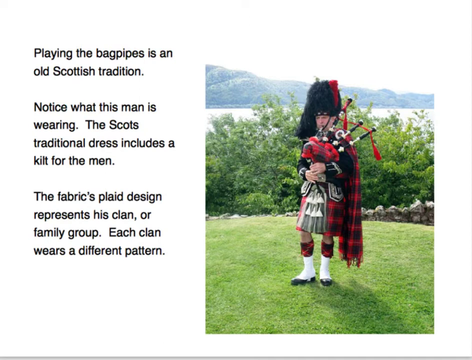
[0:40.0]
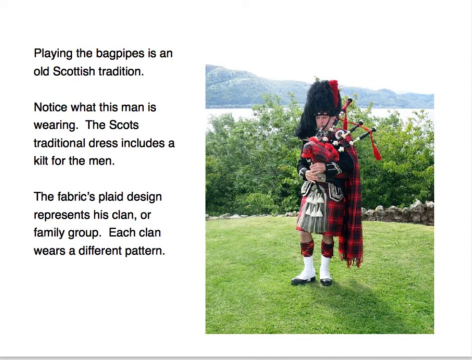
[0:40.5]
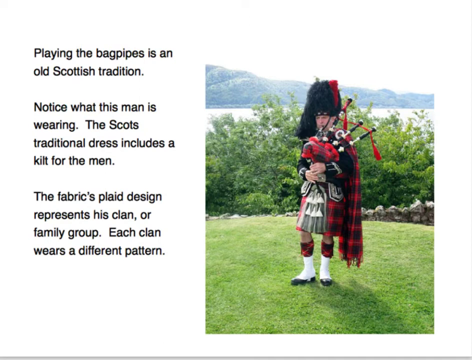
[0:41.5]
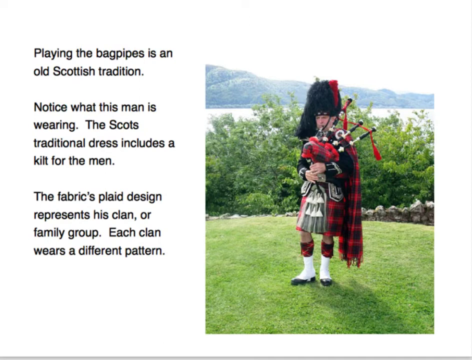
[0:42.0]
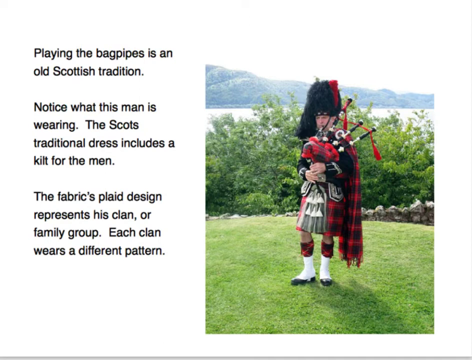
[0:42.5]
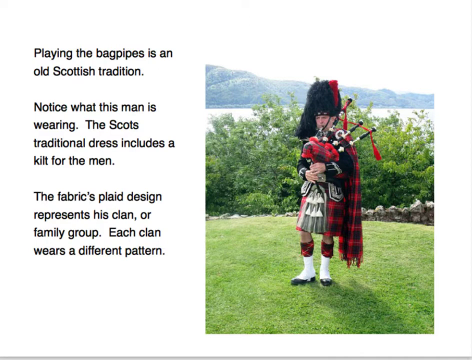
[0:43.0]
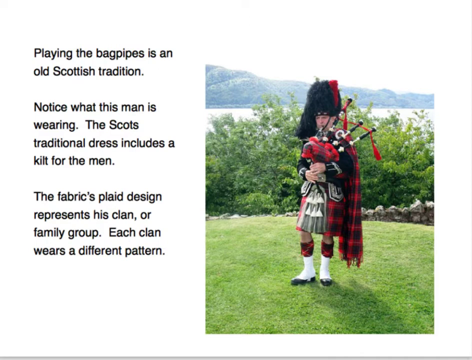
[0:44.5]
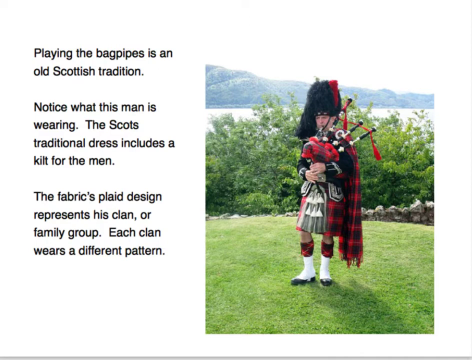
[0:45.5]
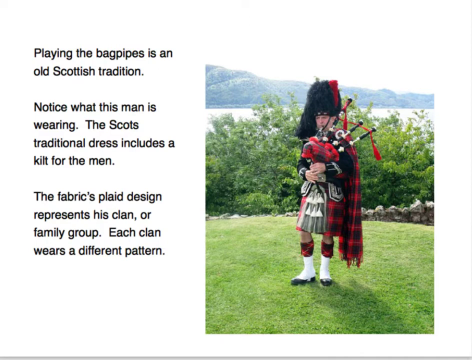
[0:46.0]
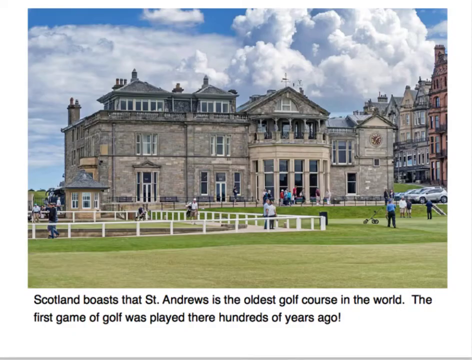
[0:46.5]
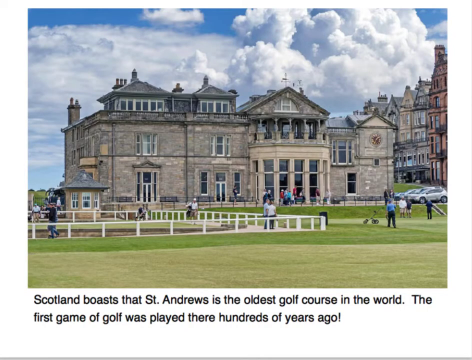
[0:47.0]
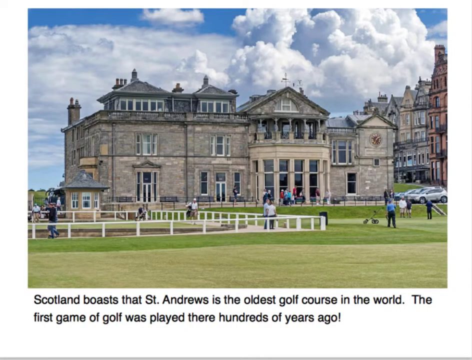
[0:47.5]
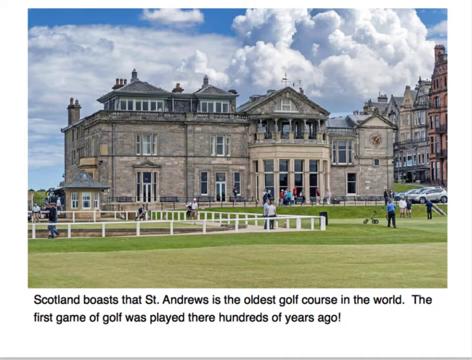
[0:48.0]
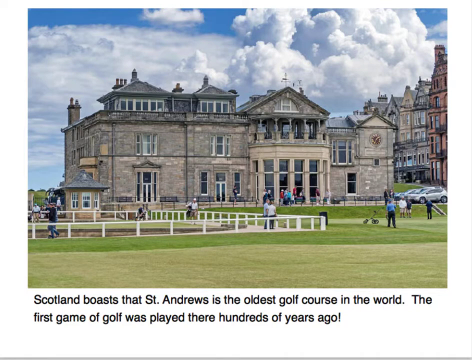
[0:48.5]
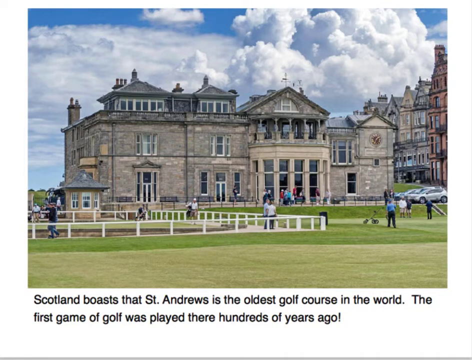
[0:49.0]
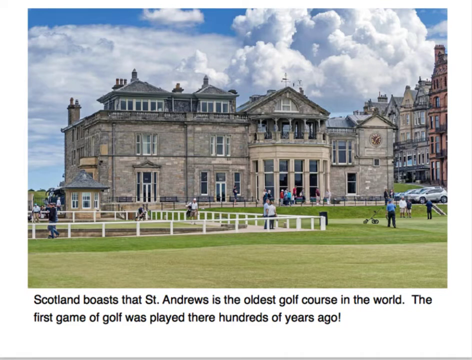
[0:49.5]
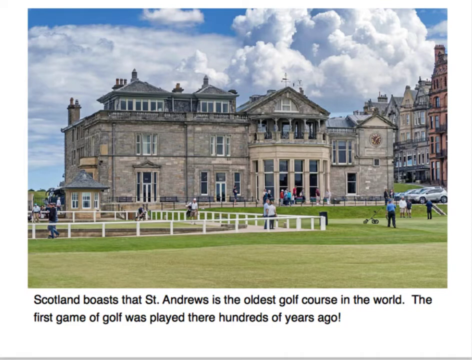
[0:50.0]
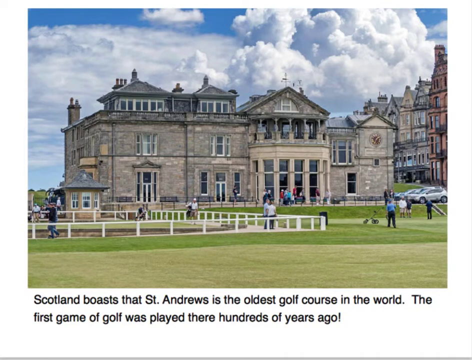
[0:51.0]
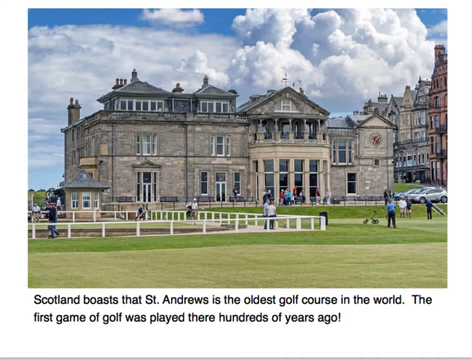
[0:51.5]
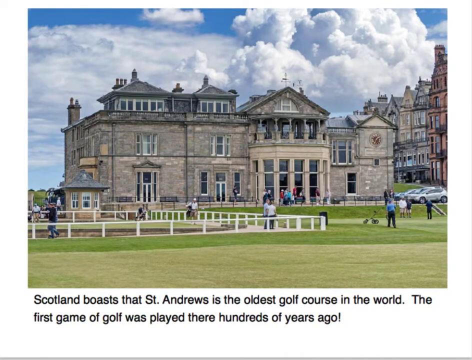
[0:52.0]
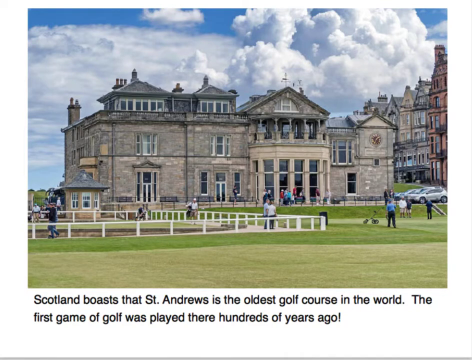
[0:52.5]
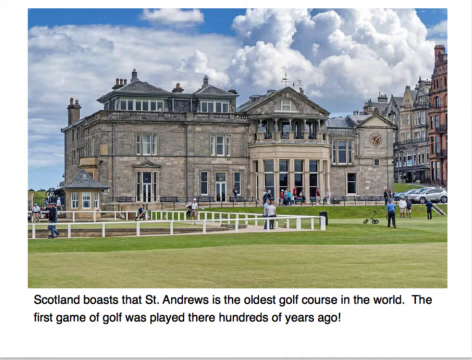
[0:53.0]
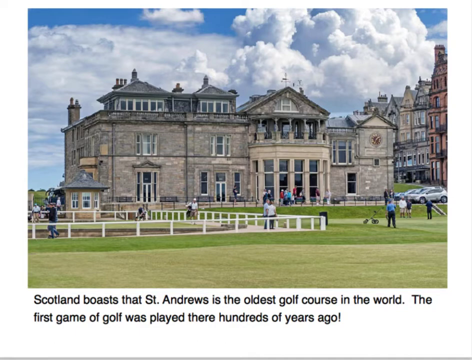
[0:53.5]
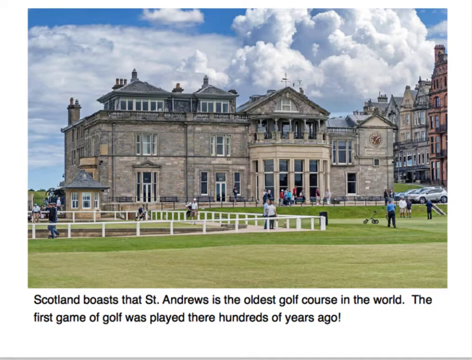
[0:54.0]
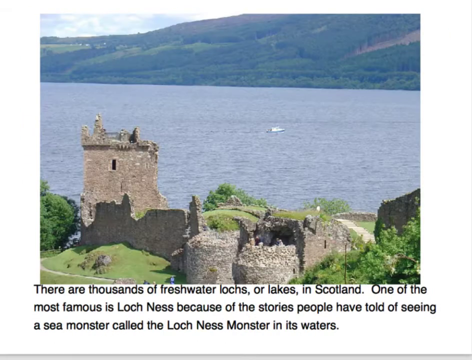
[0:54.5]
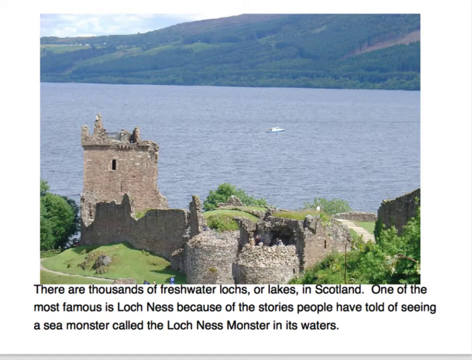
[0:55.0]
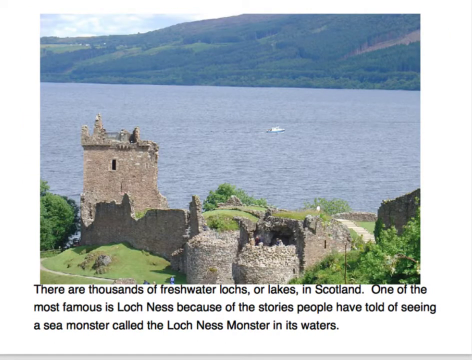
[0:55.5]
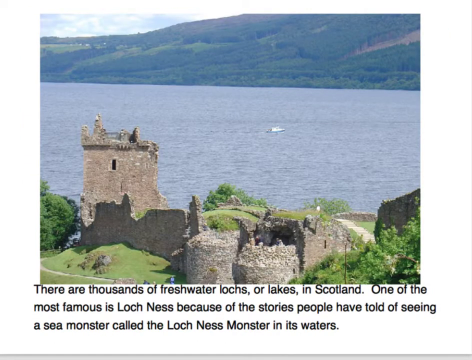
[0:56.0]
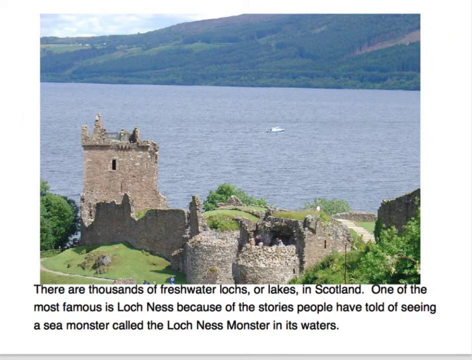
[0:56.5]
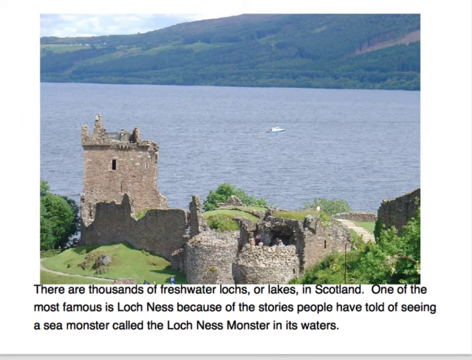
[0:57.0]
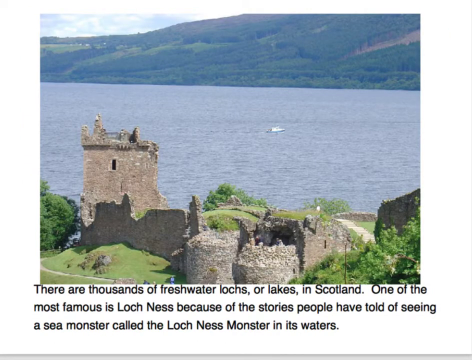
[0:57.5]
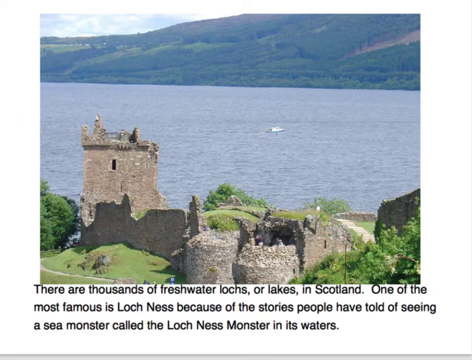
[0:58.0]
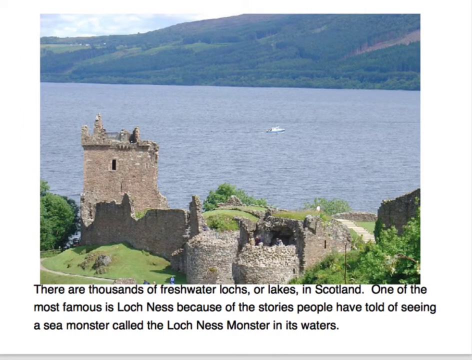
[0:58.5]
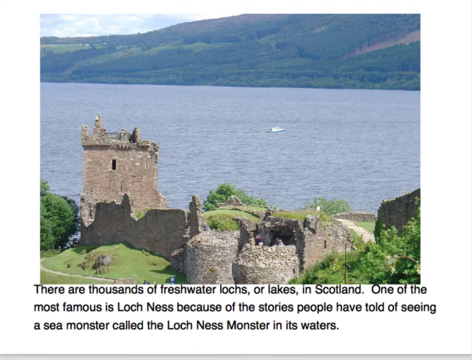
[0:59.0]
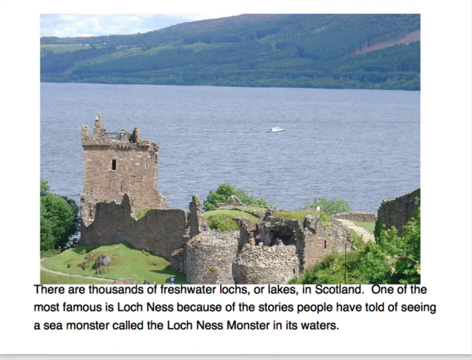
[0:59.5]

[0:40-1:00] A man wearing a red and black kilt plays bagpipes that are also red and black. He is standing on grass, and behind him are some tall bushes and trees with a mountainous scene in the distance. The text on screen reads, "Playing the bagpipes is an old Scottish tradition. Notice what this man is wearing. The Scots traditional dress includes a kilt for the men. The fabric's plaid design represents his clan or family group. Each clan wears a different pattern." Next comes St. Andrews Golf Course, with luscious green golfing turf and lots of people walking around playing golf or walking on the sidewalk in the background. In the distant background is a large, tall building. The text at the bottom reads, "Scotland boasts that St. Andrews is the oldest golf course in the world. The first game of golf was played there hundreds of years ago." The slideshow then moves to a lake scene with a boat in the far distance and tall hills and mountains in the background.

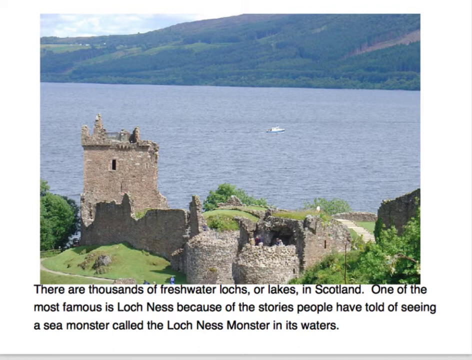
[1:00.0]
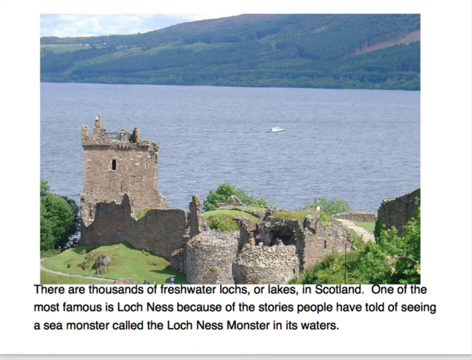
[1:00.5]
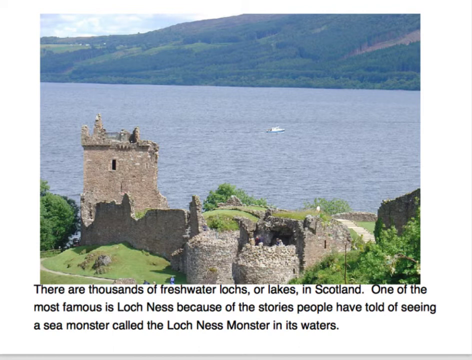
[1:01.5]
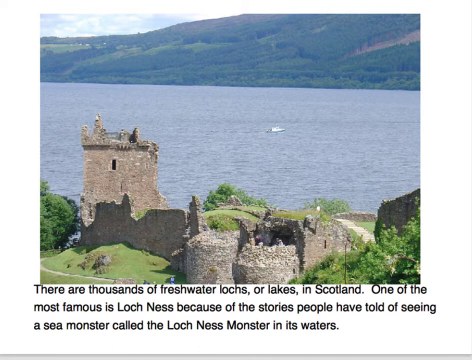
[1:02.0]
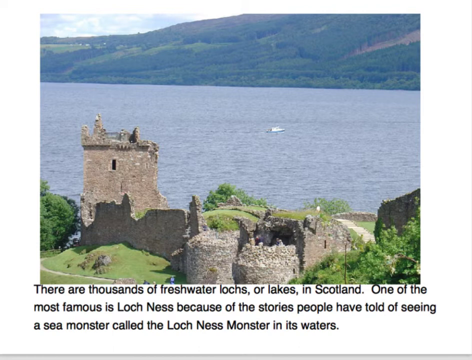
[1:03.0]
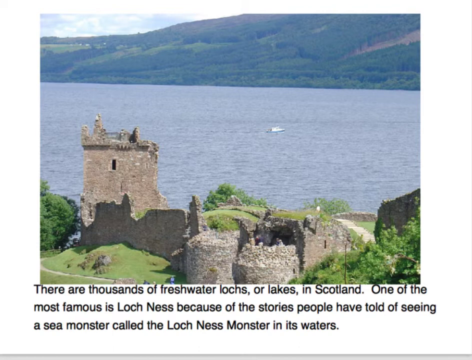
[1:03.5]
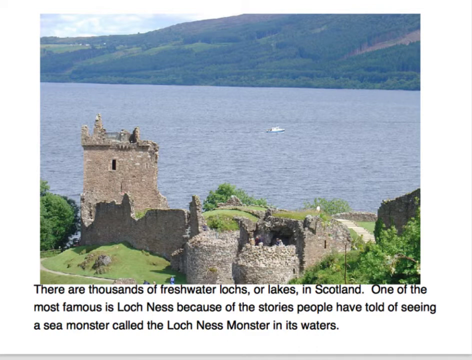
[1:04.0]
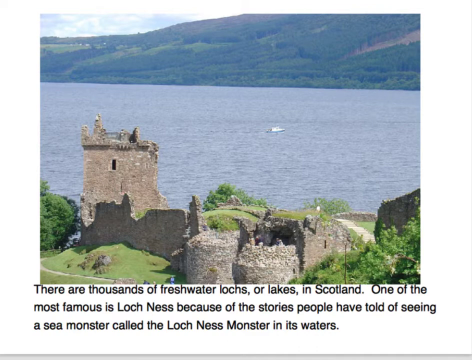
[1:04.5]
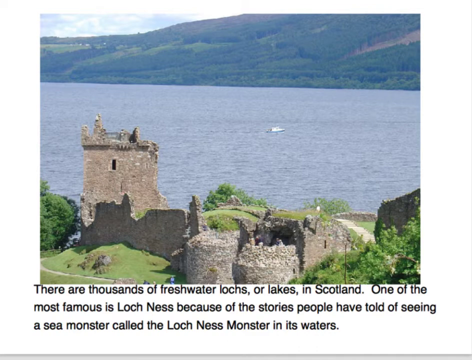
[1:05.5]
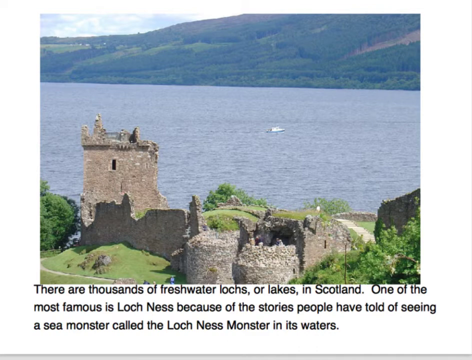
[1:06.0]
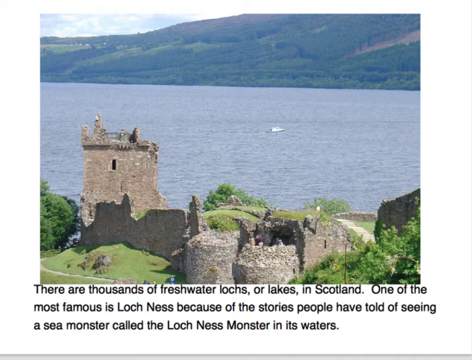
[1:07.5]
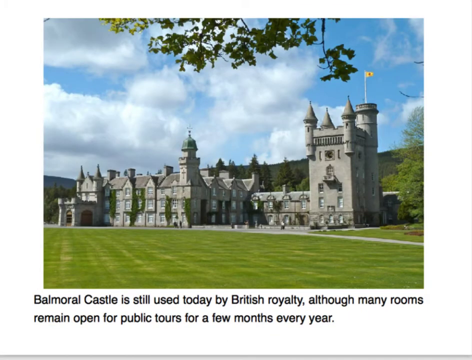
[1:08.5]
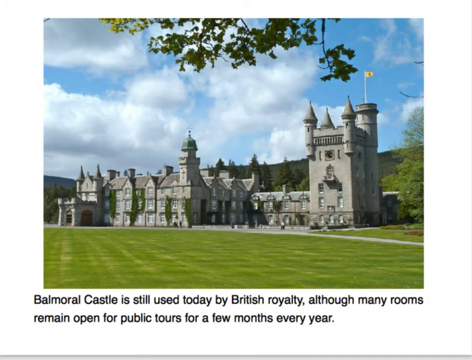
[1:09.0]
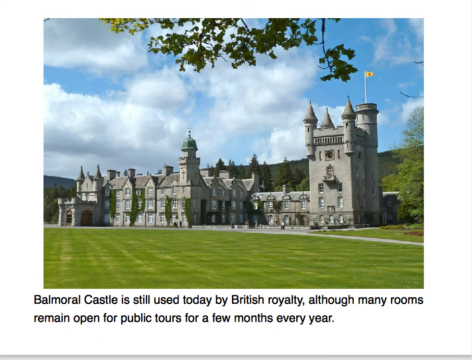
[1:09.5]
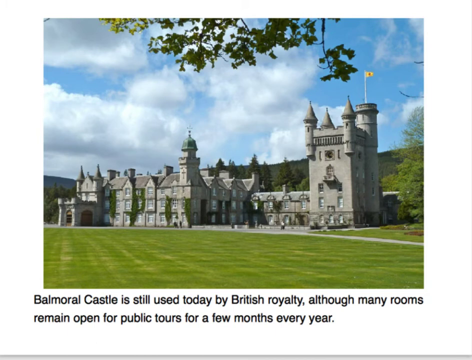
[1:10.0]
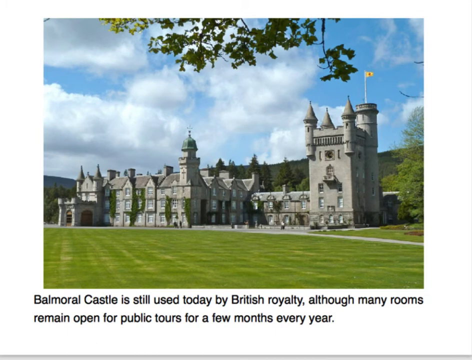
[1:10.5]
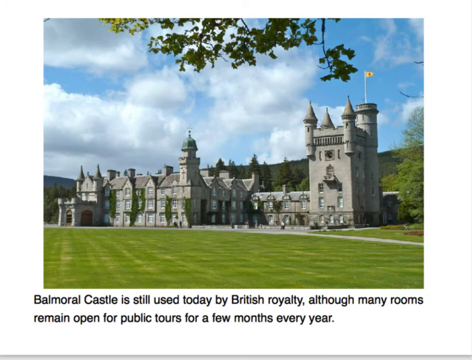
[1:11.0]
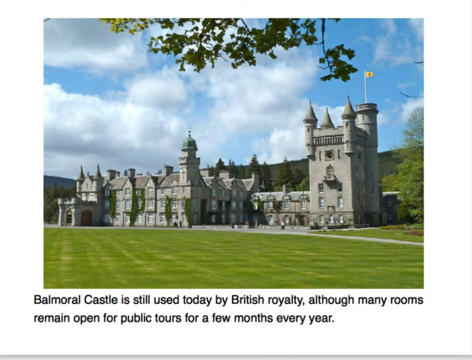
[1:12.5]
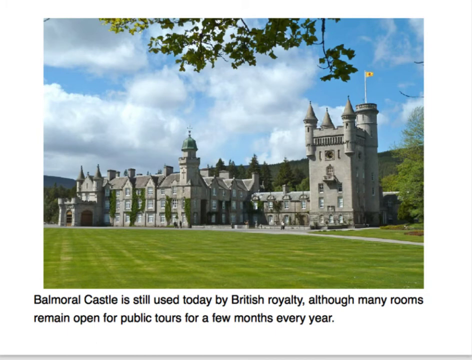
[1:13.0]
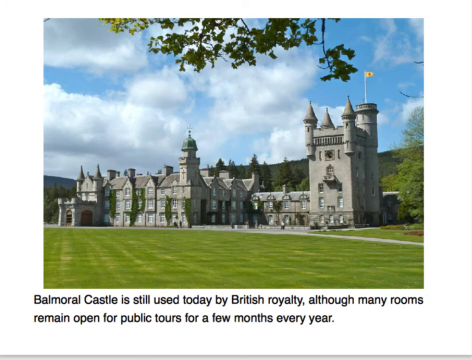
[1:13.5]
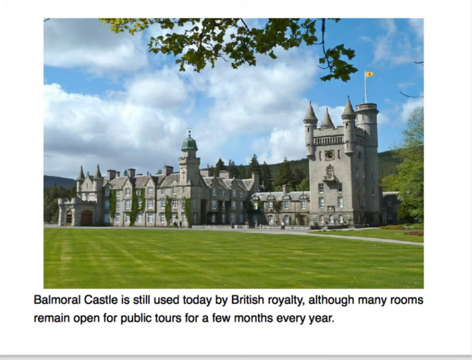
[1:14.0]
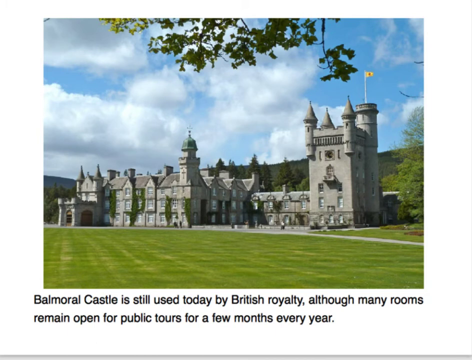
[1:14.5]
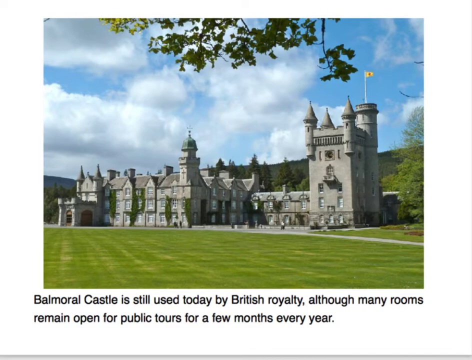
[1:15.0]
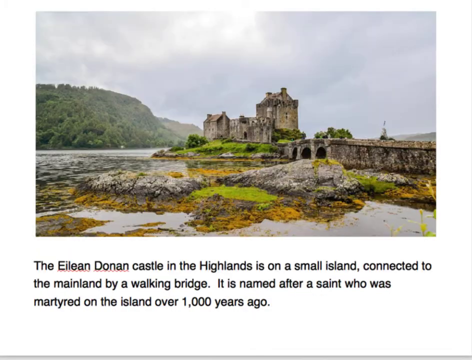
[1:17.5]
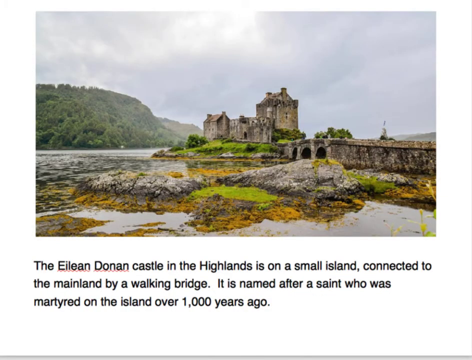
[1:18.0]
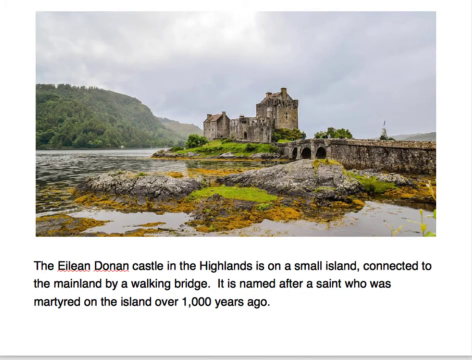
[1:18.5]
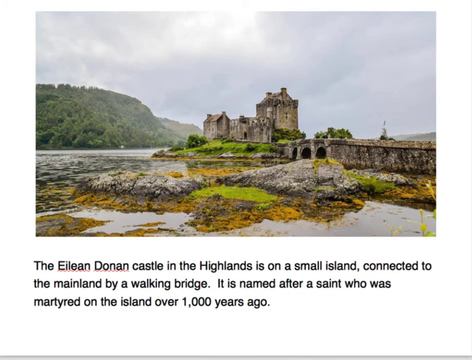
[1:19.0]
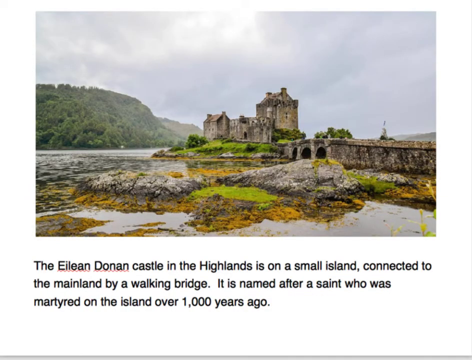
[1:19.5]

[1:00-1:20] Near the forefront of the scene is an old, run-down, castle-looking building with lots of greenery and trees all around it; it looks very old. The text at the bottom reads, "There are thousands of freshwater lochs or lakes in Scotland. One of the most famous is Loch Ness because of the stories people have told of seeing a sea monster called the Loch Ness Monster." The next image shows a large castle many stories high, with pillars and flags all throughout the top of it. In front of the castle is a well-maintained lawn with a sidewalk going around the front of the castle. In the background are mountains, clouds and blue skies. The text at the bottom reads, "Balmoral Castle is still used today by British royalty, although many rooms remain open for public tours for a few months every year."